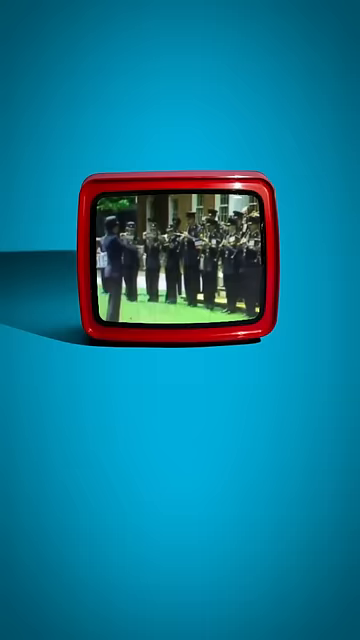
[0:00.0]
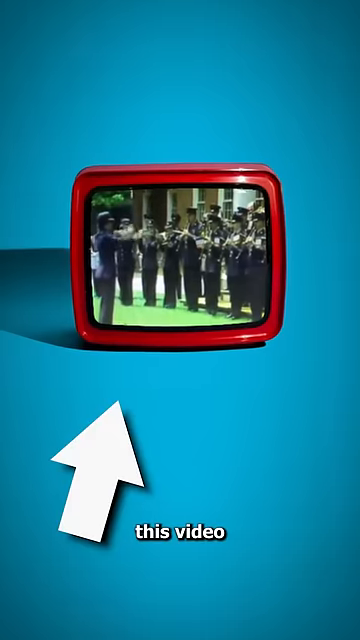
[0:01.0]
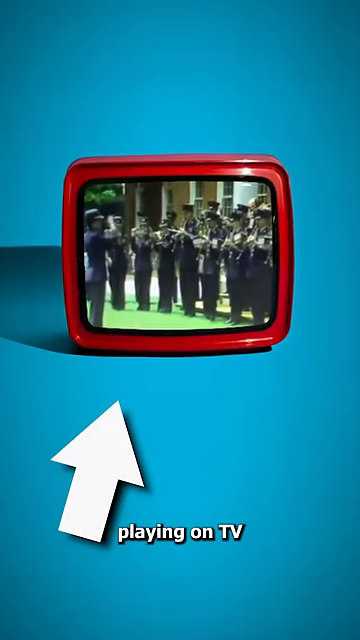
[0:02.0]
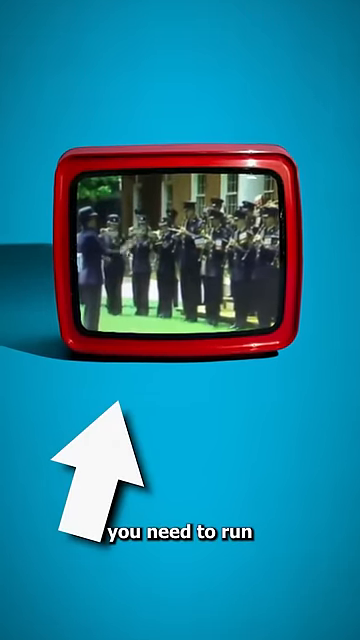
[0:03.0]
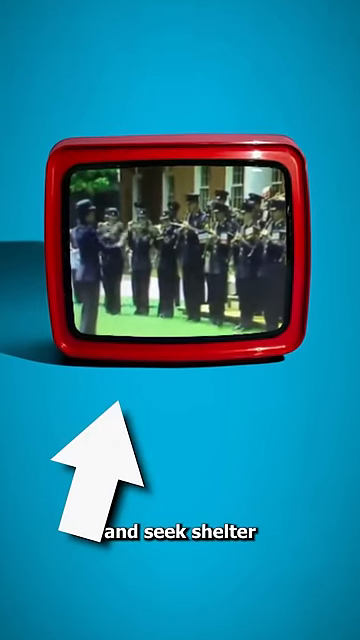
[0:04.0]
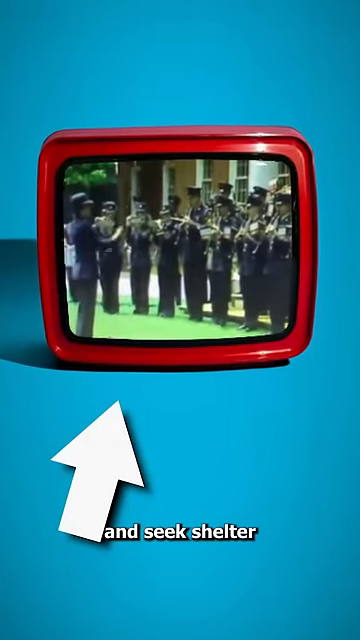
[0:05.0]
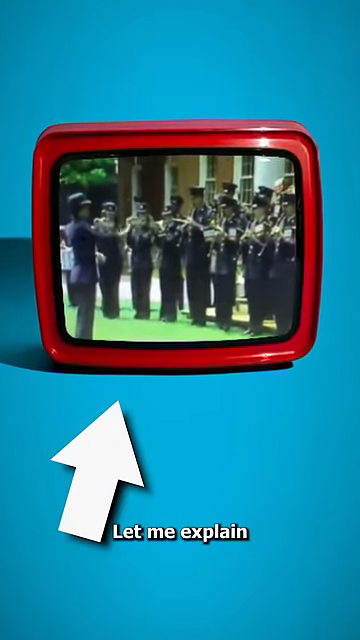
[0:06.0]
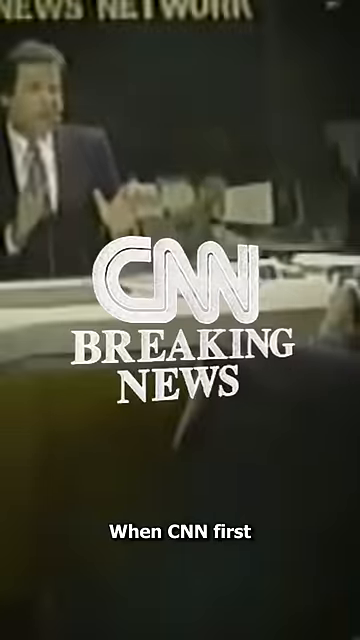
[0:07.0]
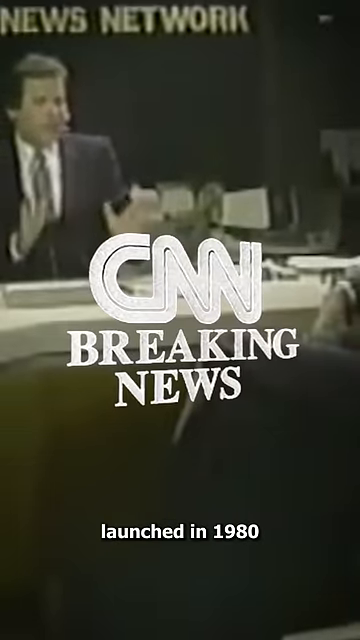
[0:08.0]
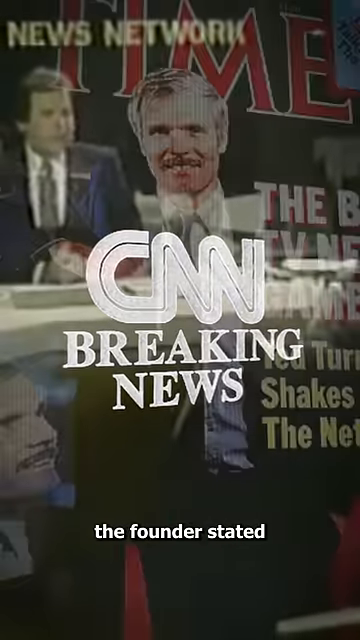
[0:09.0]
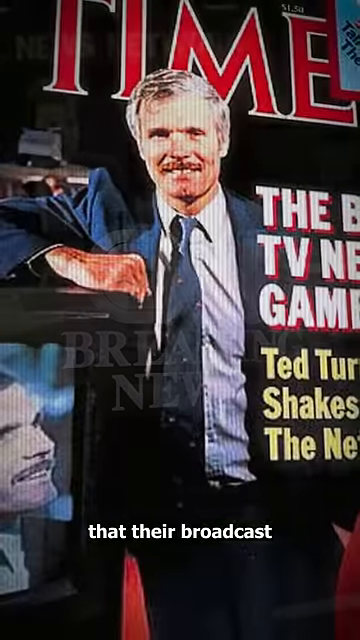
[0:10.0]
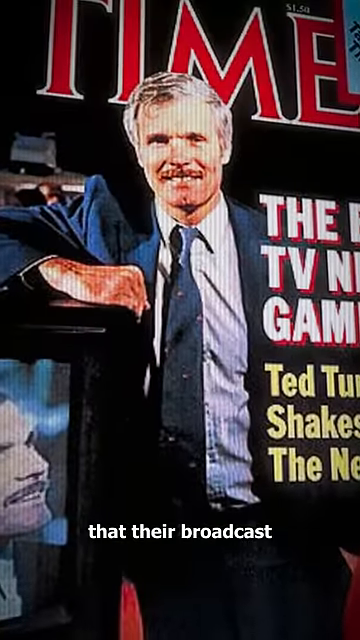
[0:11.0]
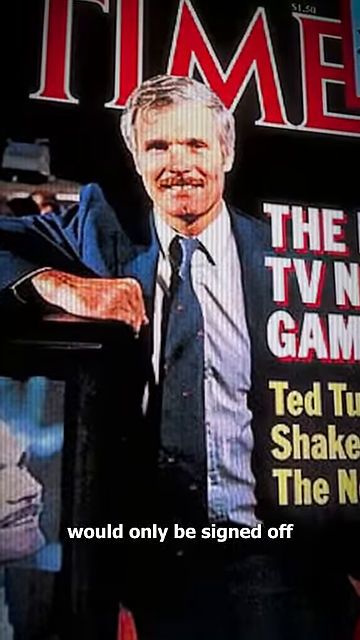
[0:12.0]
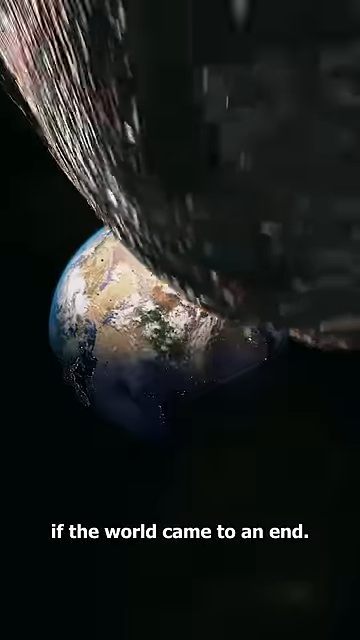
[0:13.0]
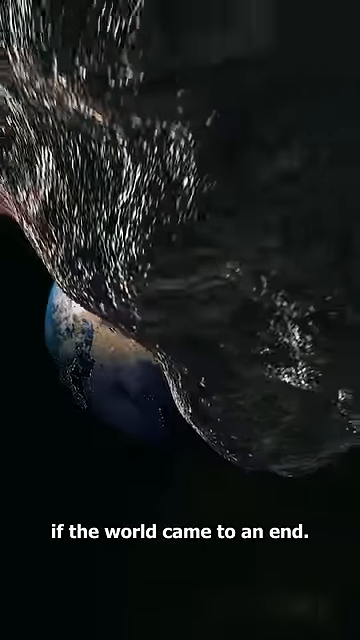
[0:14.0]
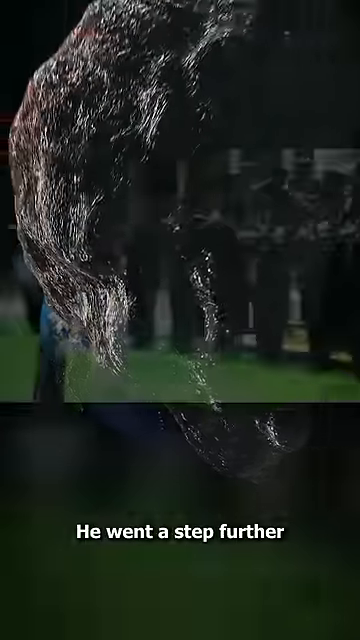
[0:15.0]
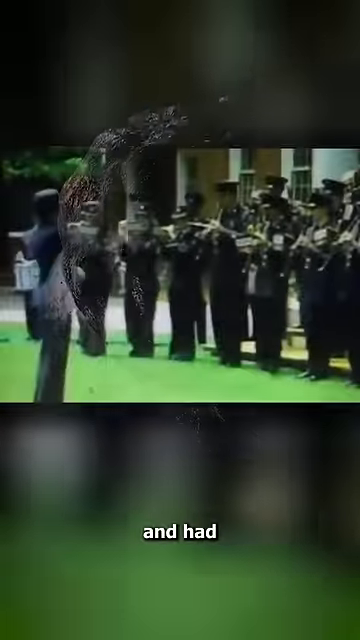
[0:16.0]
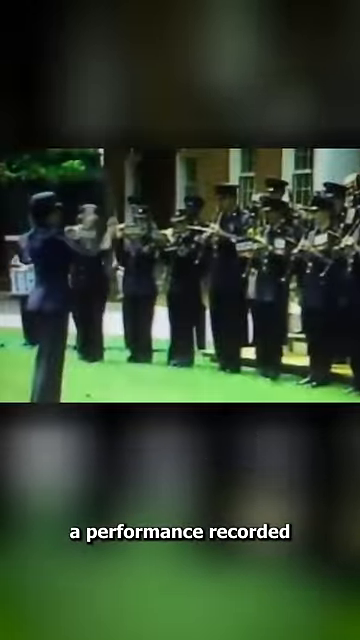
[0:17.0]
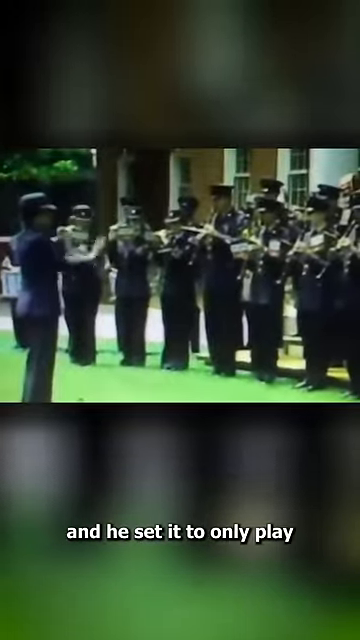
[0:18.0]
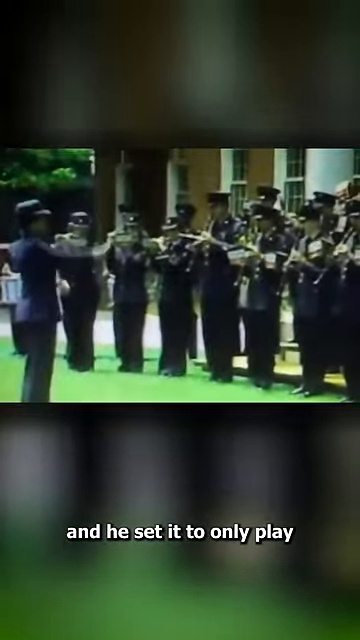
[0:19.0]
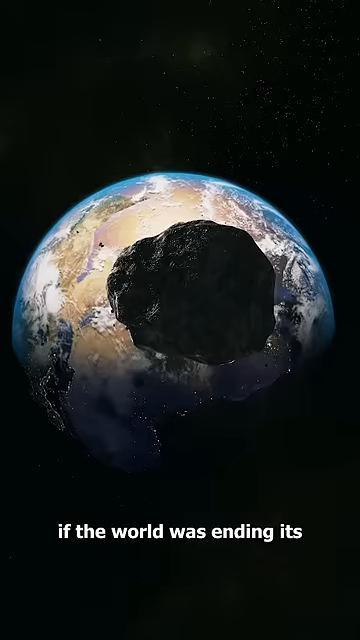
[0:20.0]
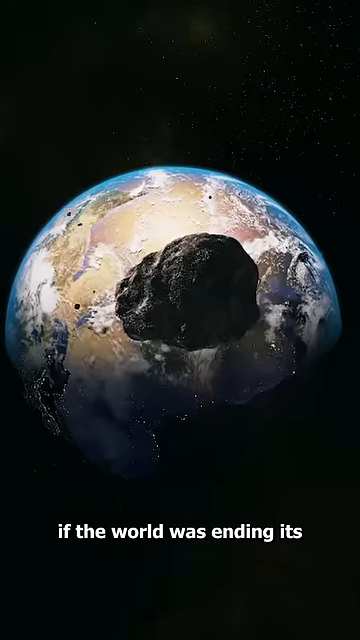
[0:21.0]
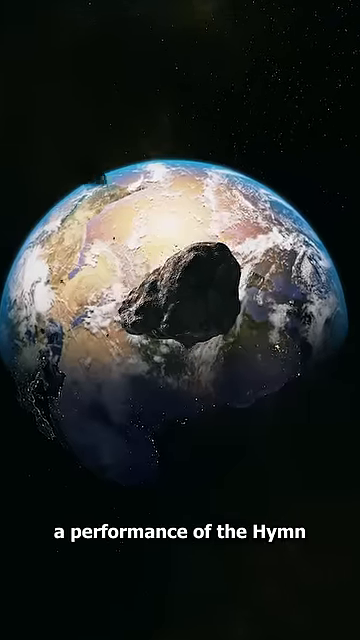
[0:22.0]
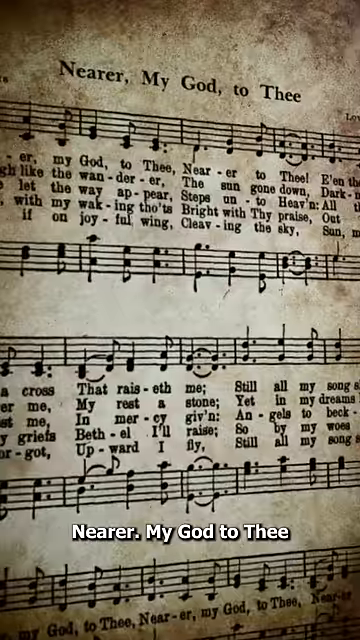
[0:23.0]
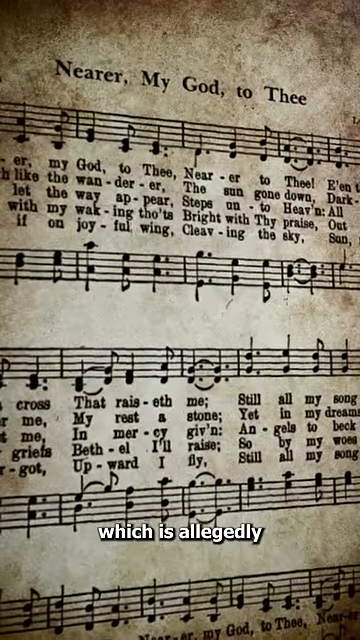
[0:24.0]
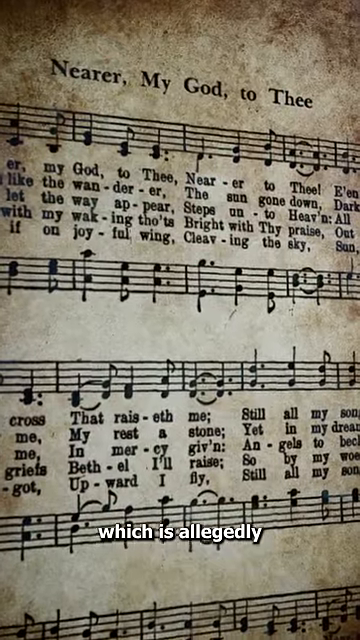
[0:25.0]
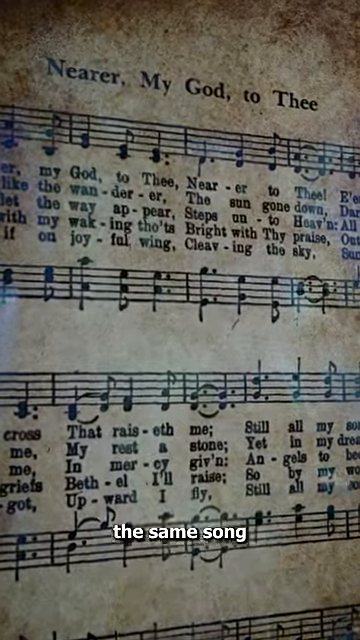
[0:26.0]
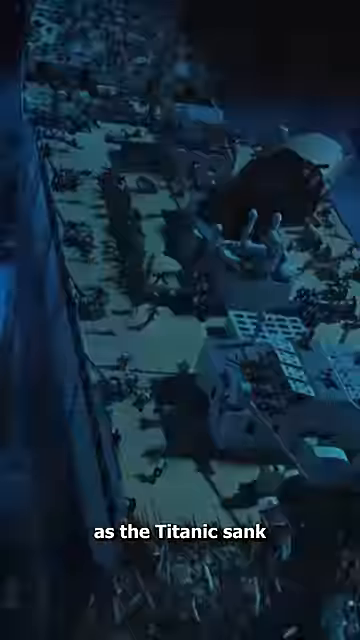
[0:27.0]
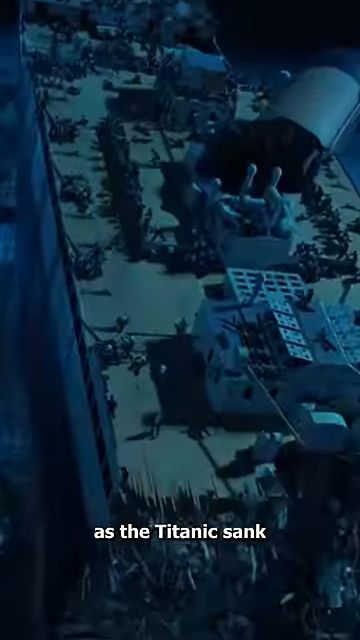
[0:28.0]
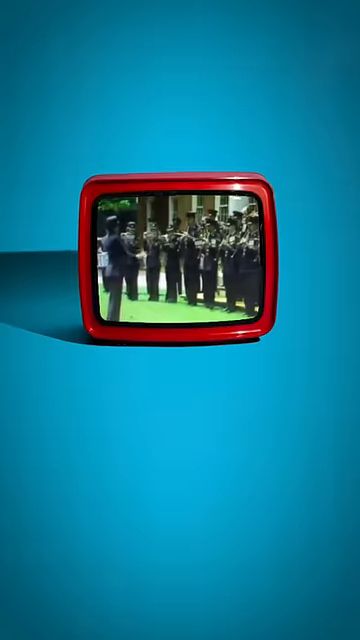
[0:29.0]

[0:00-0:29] The video plays on what is depicted as a TV showing a band performing. White subtitles state "if you see this performance you need to run," with a white arrow pointing at the TV. The screen transitions, and the subtitles explain that CNN Breaking News uses this footage to explain why this is the end of the world. The camera zooms in on a picture of the founder on Time Magazine, who has gray hair and a black mustache and is smirking. The screen then transitions to a marching band playing, followed by a CGI meteor hitting the sky. The subtitles state that this sheet music uses the song played on the Titanic as it sank, and conclude that if this video is seen on TV, it is definitely time to seek shelter and run.